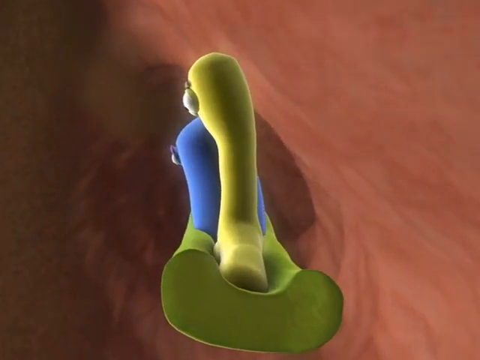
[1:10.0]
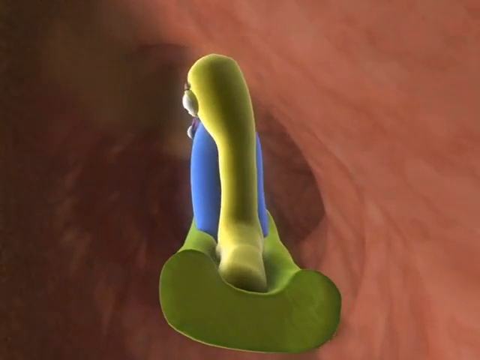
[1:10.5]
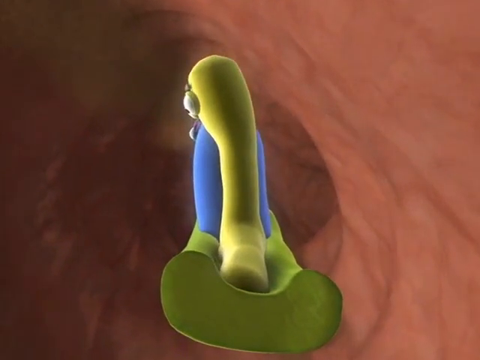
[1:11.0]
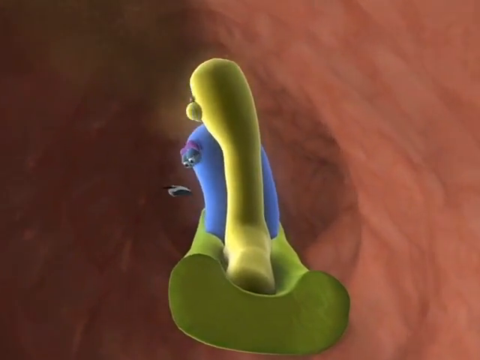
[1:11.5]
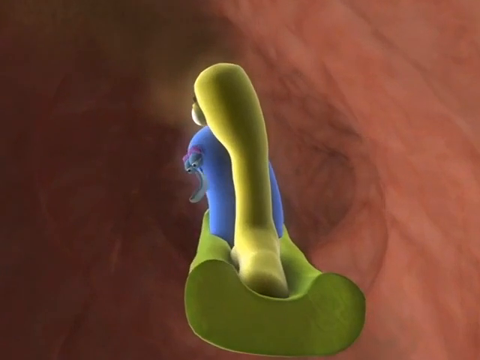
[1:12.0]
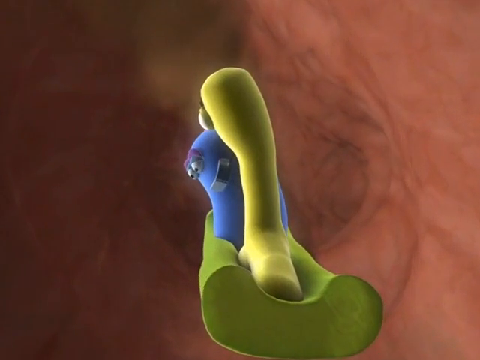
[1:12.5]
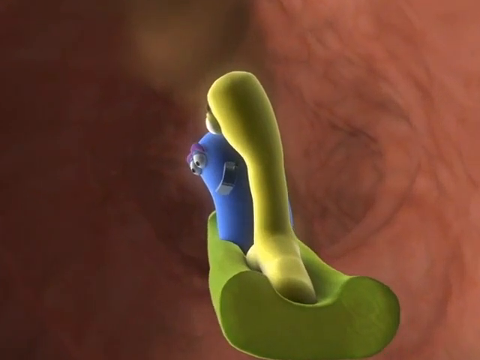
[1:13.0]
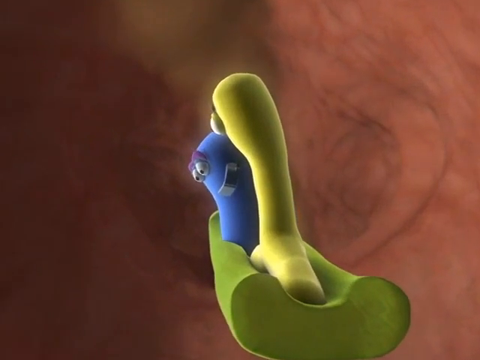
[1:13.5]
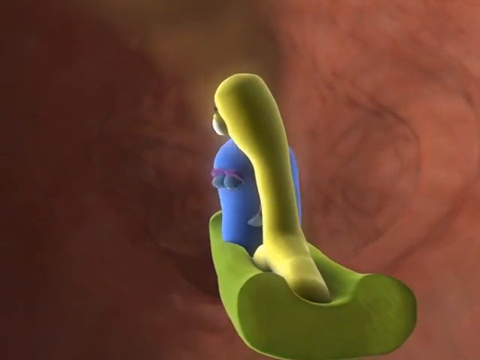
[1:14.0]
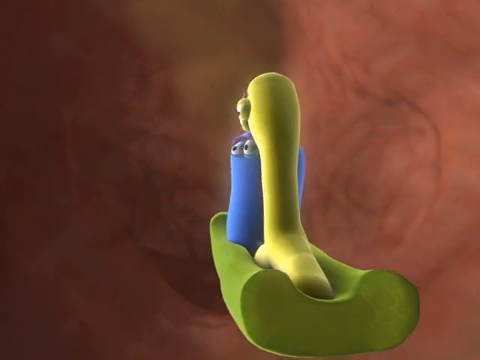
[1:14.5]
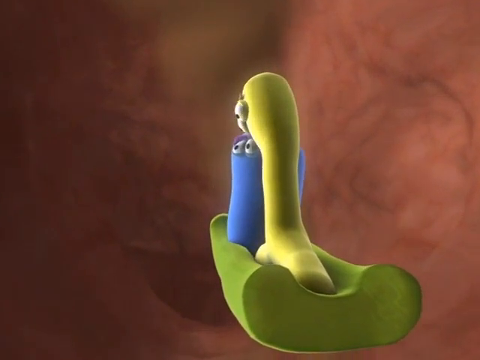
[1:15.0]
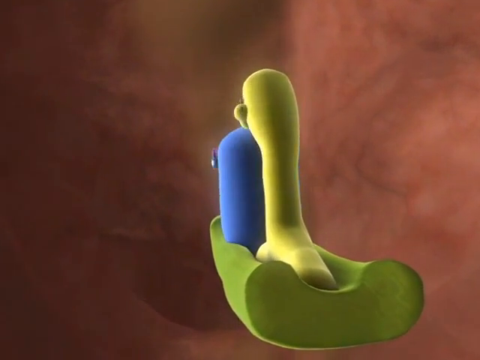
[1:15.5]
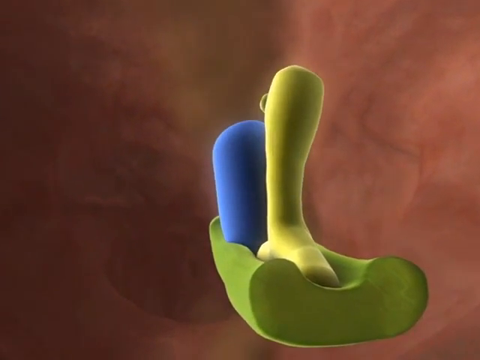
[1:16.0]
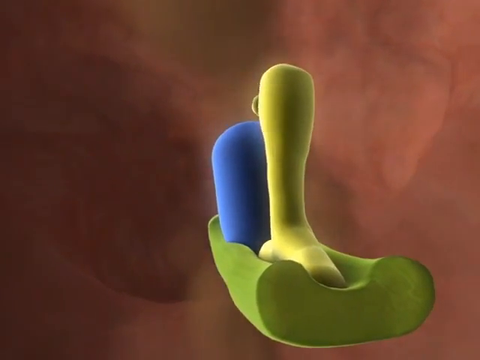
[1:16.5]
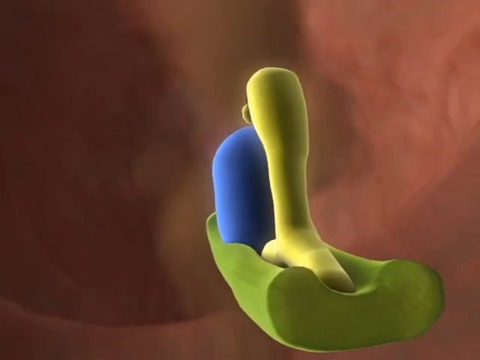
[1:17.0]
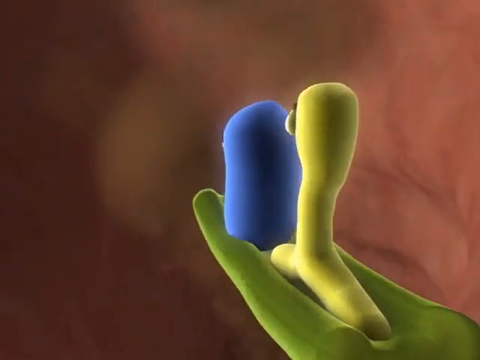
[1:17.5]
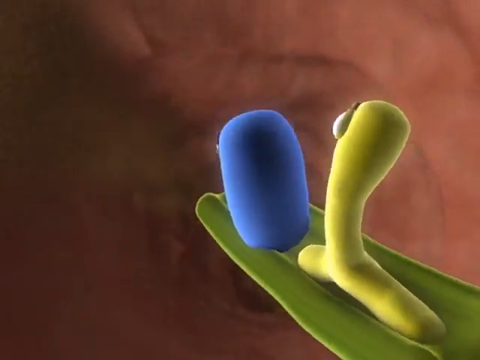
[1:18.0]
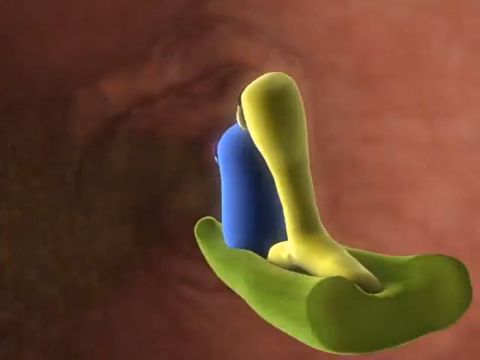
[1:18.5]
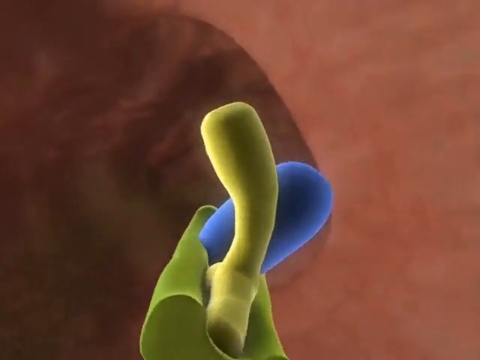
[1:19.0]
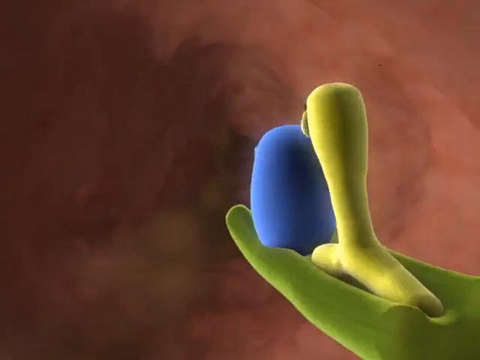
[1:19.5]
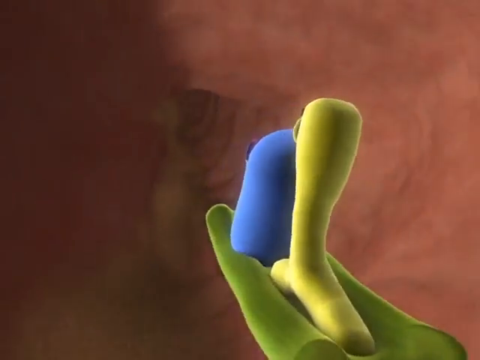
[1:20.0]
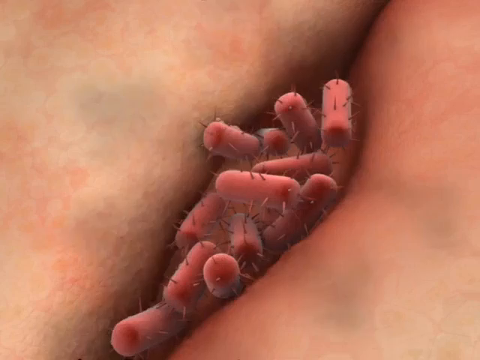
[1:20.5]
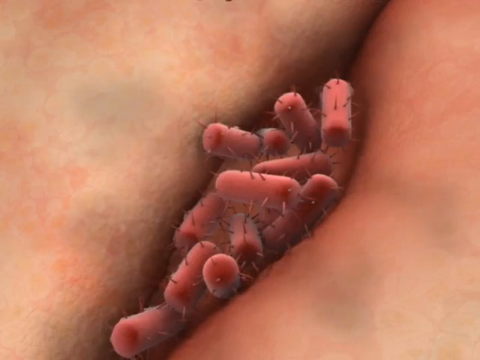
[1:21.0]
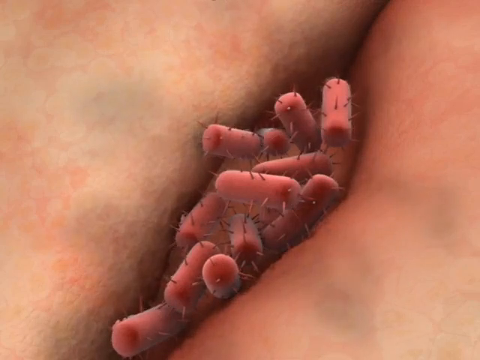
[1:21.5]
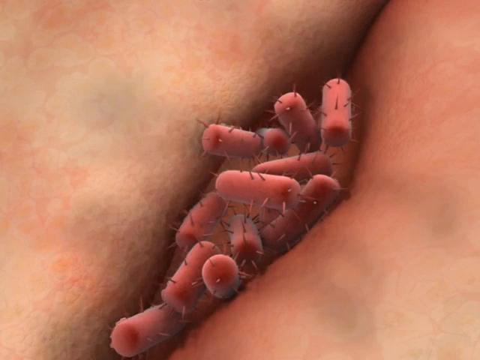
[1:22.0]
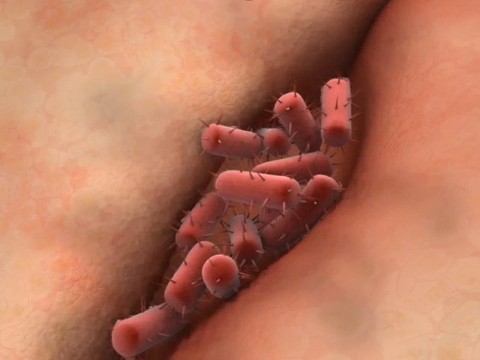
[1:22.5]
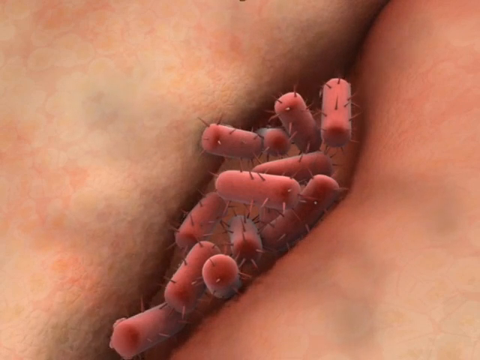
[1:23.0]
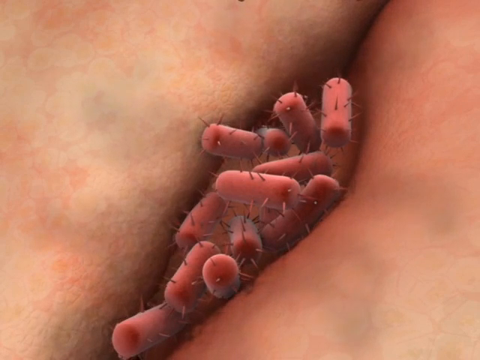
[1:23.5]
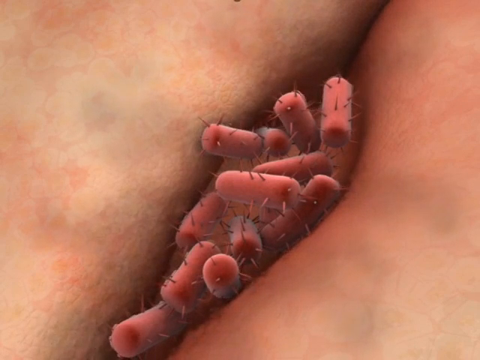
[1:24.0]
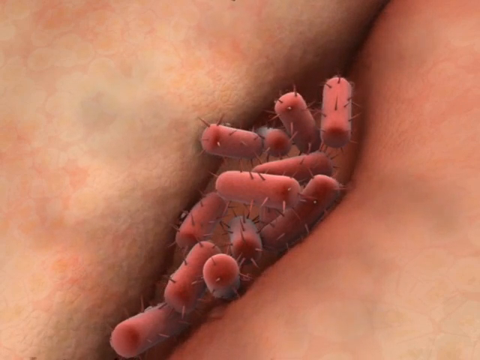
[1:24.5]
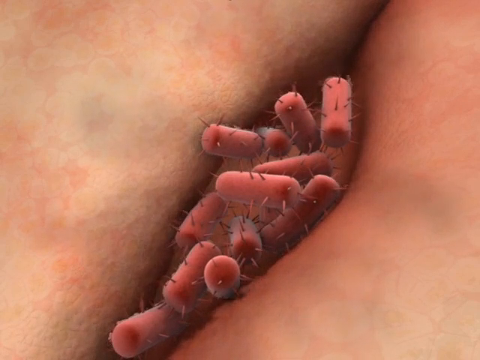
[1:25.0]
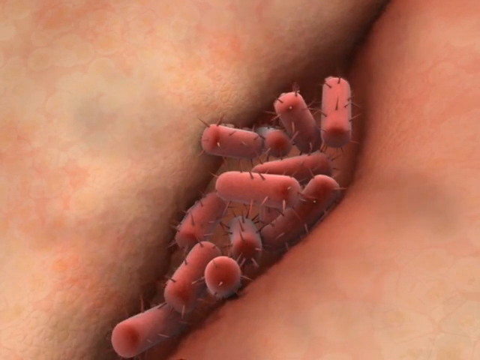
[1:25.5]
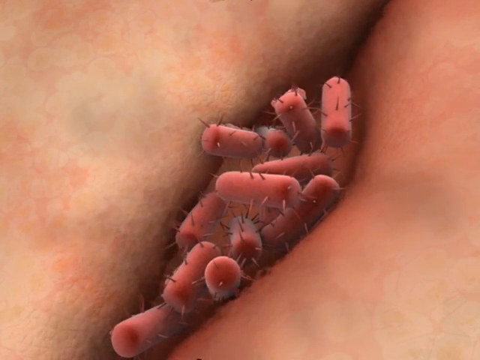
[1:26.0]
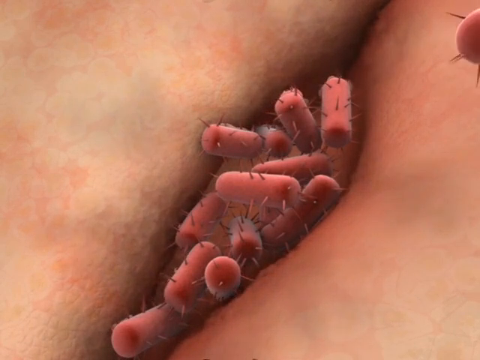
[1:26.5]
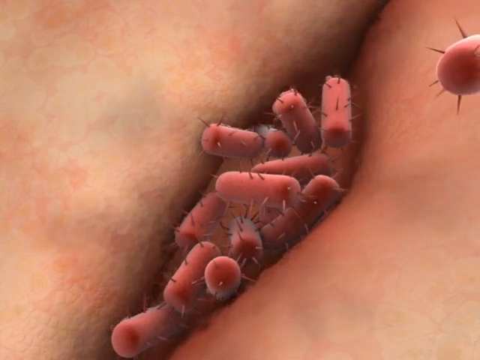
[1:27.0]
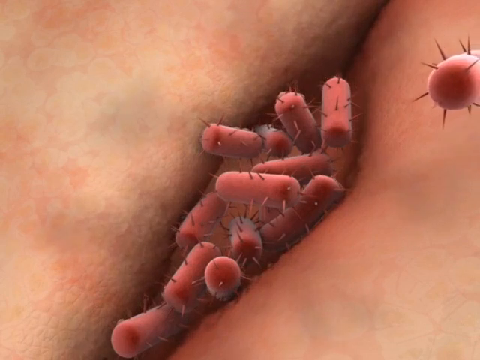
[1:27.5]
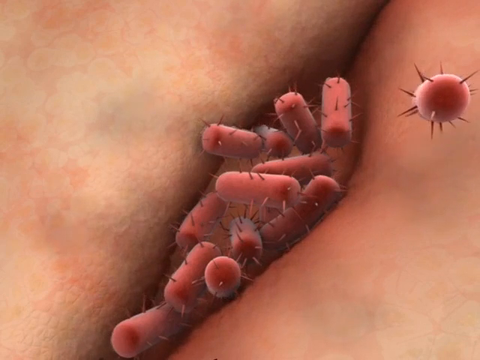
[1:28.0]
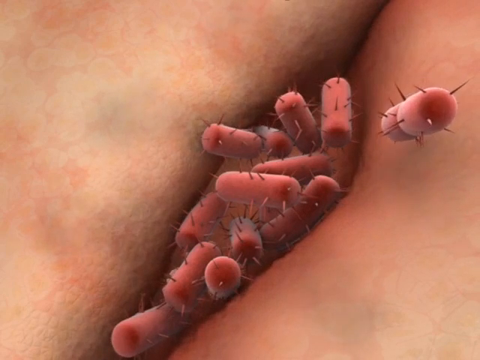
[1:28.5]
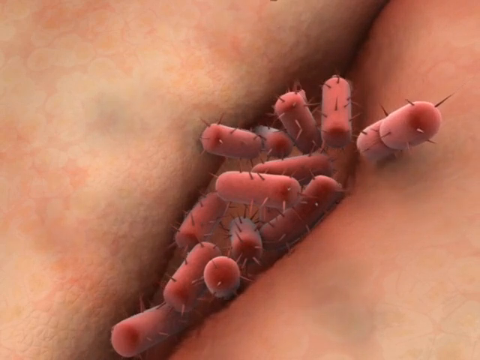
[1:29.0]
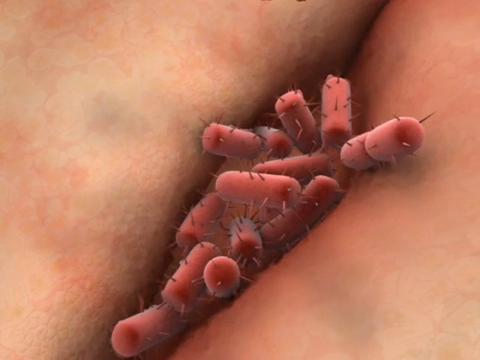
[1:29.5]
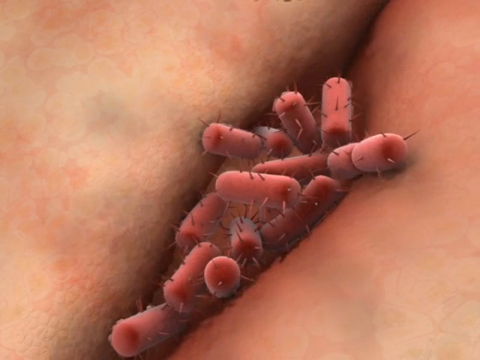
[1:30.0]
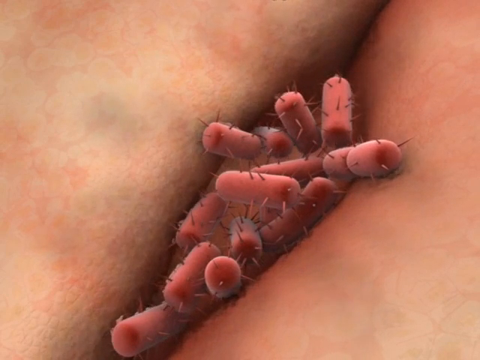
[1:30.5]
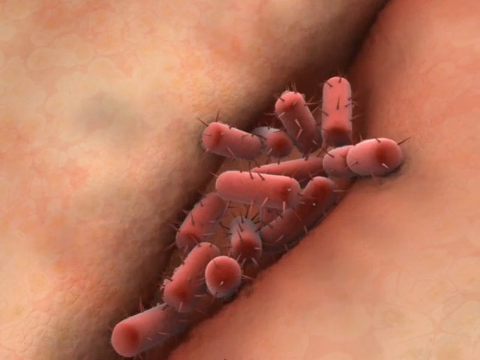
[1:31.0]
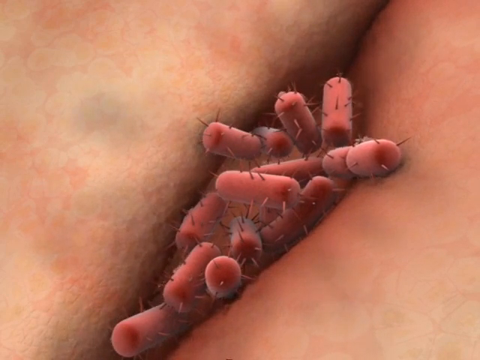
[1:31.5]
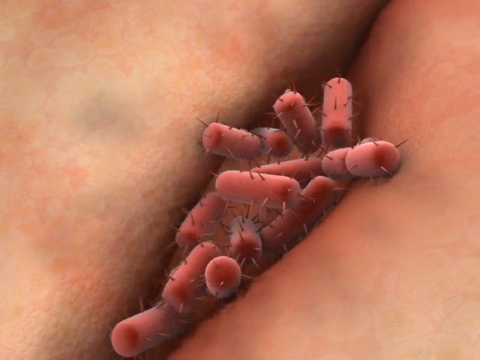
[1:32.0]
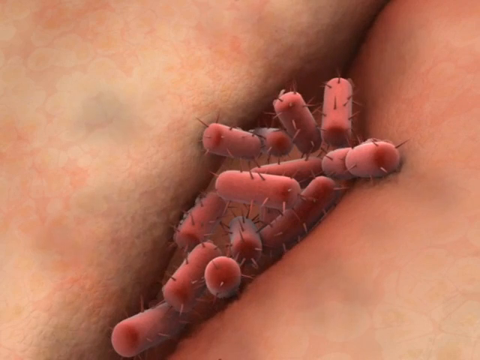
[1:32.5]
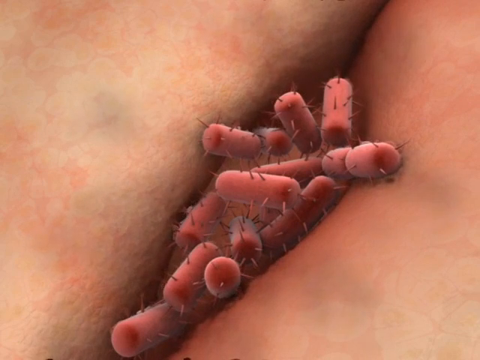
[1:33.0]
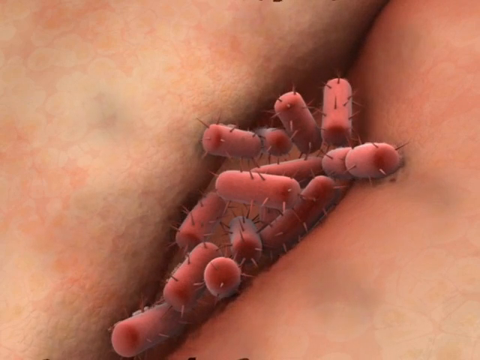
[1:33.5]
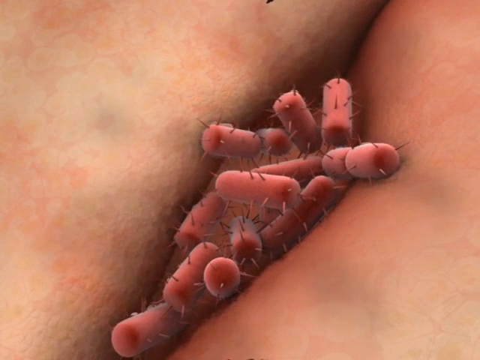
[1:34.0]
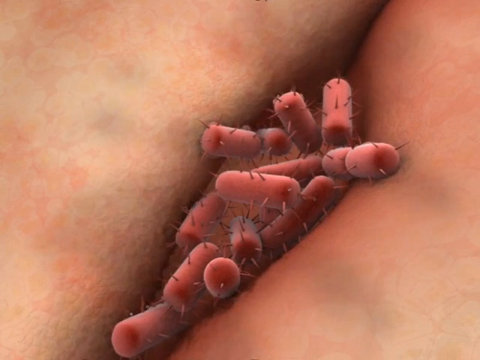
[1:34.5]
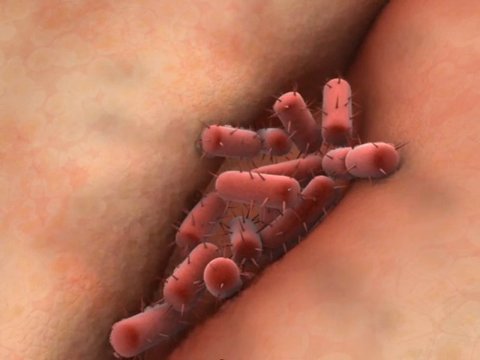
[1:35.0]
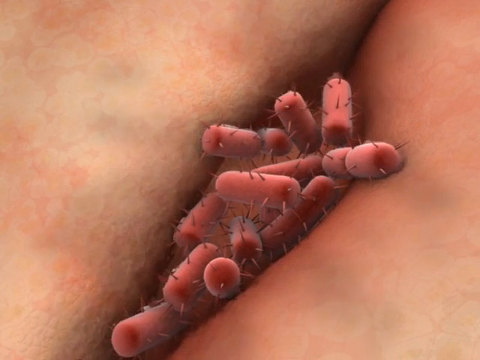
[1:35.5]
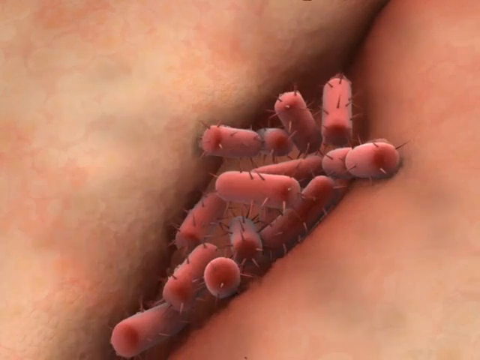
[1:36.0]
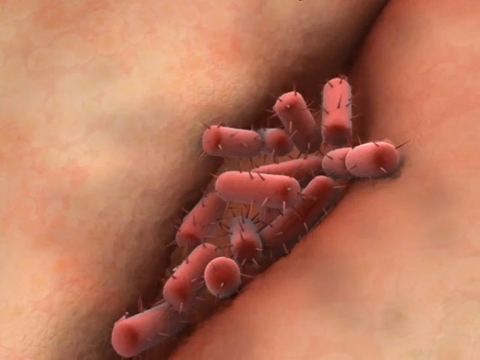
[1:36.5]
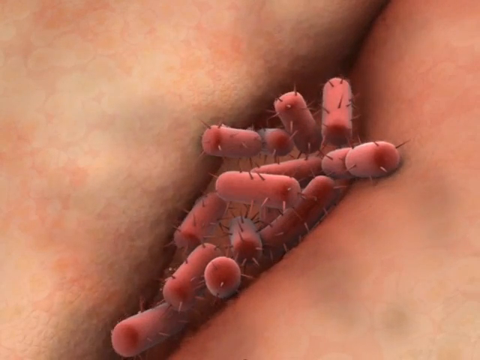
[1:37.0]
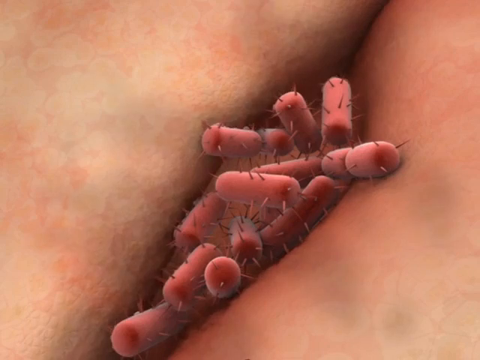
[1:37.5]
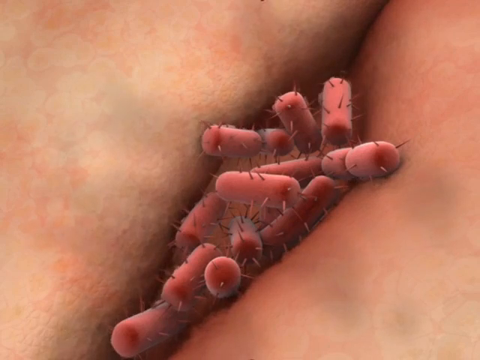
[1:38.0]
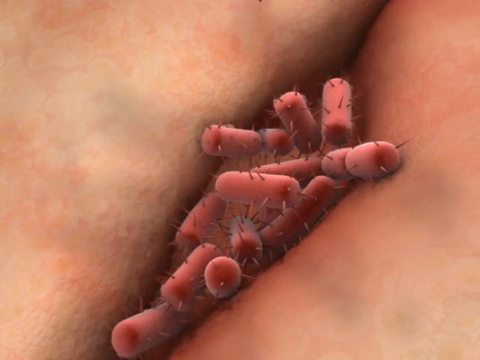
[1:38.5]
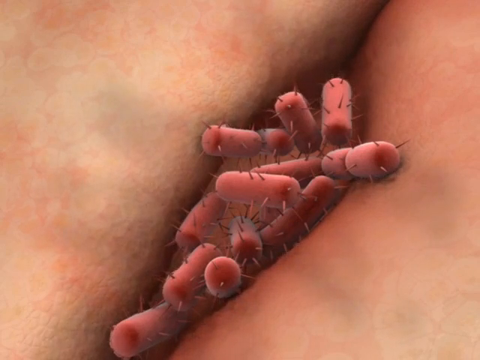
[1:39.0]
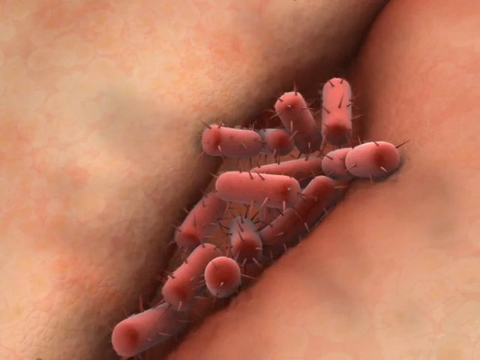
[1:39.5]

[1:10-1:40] The two probiotics ride together on the boat-like object through what looks like the intestines. The blue probiotic turns its body, showing its eyes, and looks over at the yellow probiotic. Both look worried as they continue their journey. Their surroundings rotate as they move faster, traveling very quickly through the intestine-like tunnel. In the middle, red long structures with spikes appear in an opening, and another spiked red structure comes in from the right side. They seem to be in some sort of hole or cut in the middle, and they are moving, with very sharp spikes around their bodies.